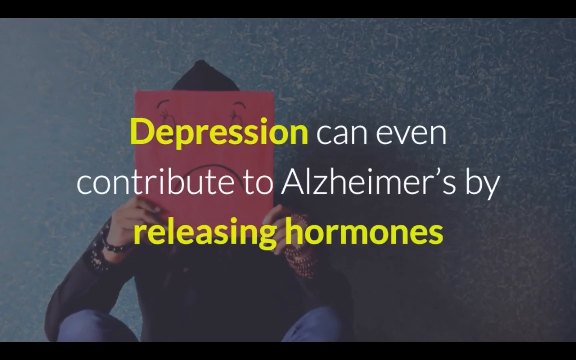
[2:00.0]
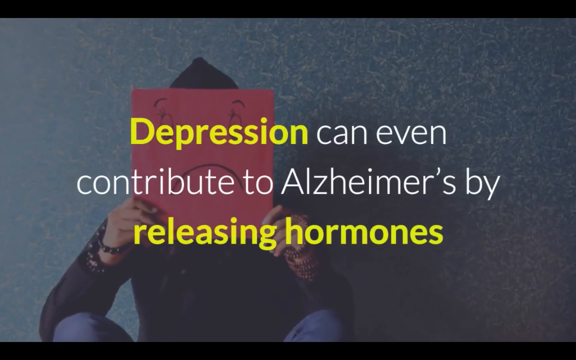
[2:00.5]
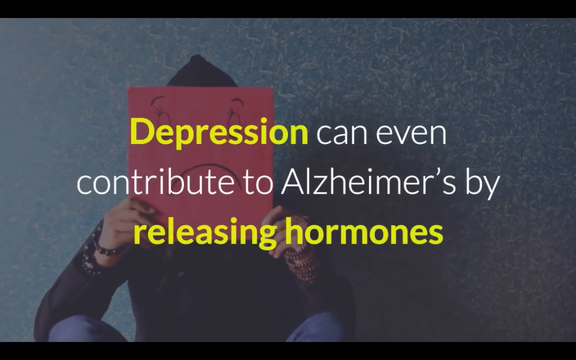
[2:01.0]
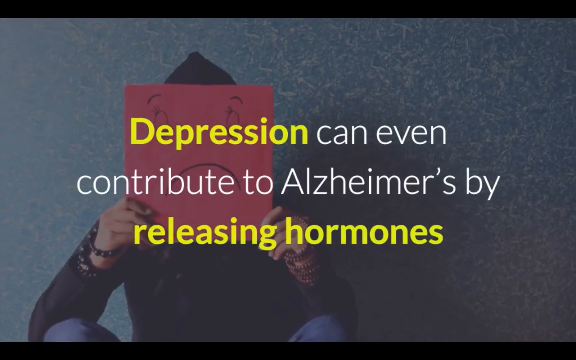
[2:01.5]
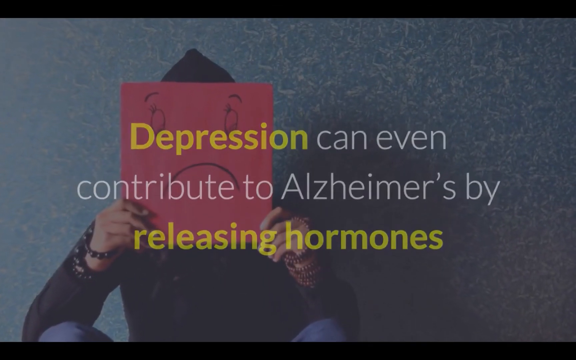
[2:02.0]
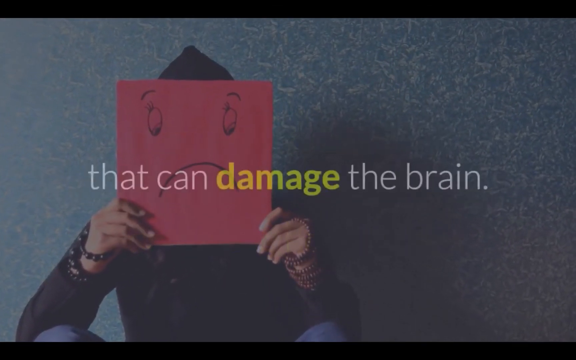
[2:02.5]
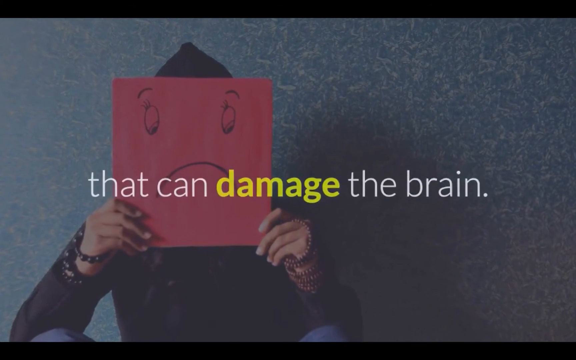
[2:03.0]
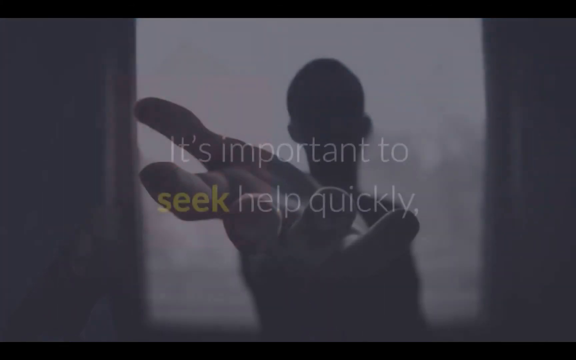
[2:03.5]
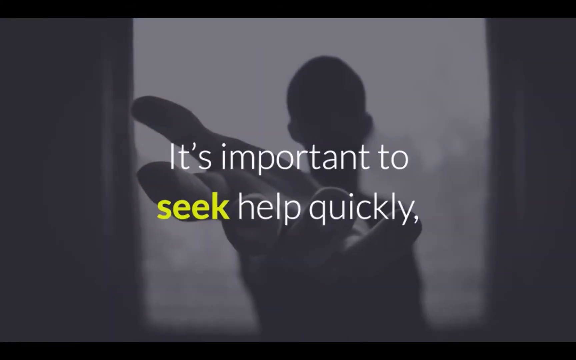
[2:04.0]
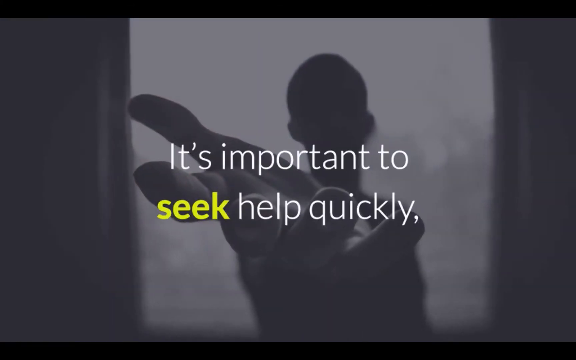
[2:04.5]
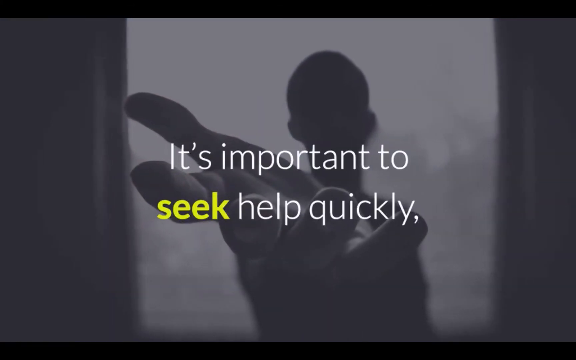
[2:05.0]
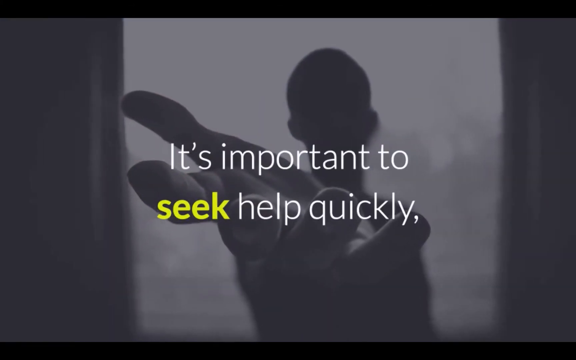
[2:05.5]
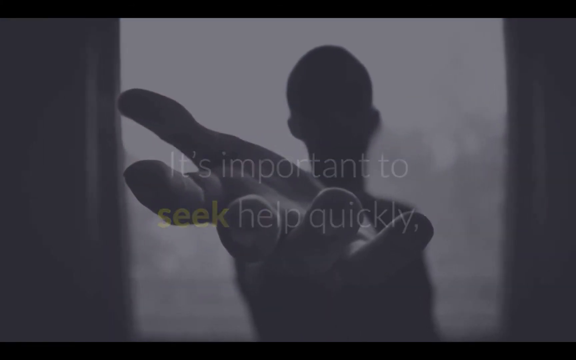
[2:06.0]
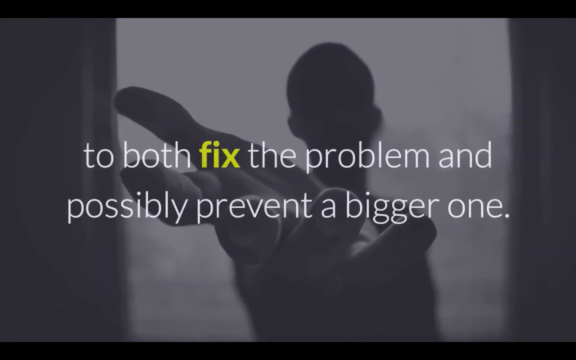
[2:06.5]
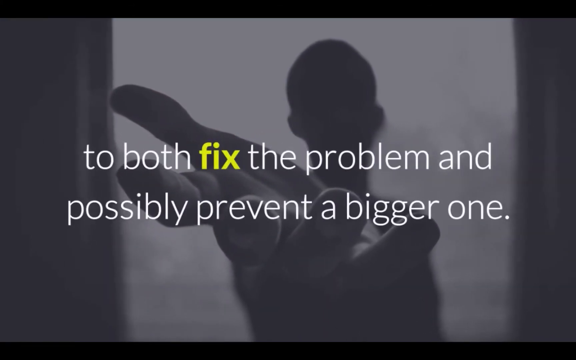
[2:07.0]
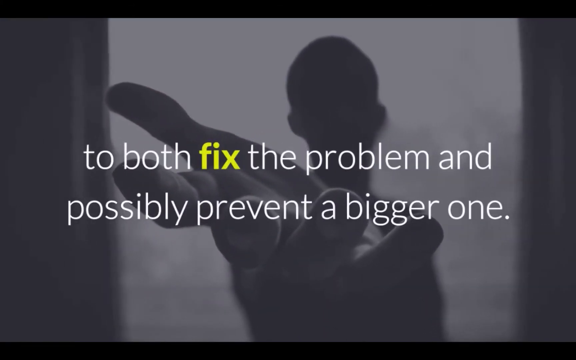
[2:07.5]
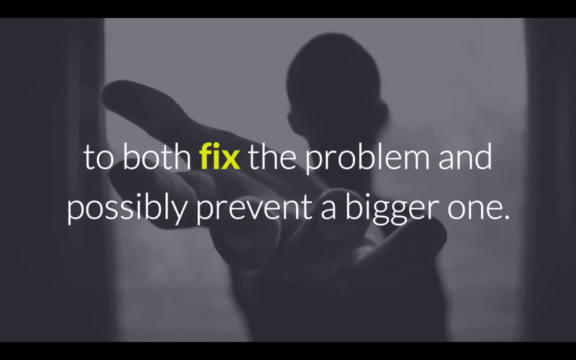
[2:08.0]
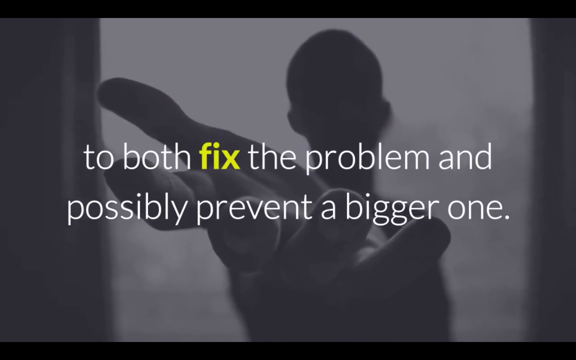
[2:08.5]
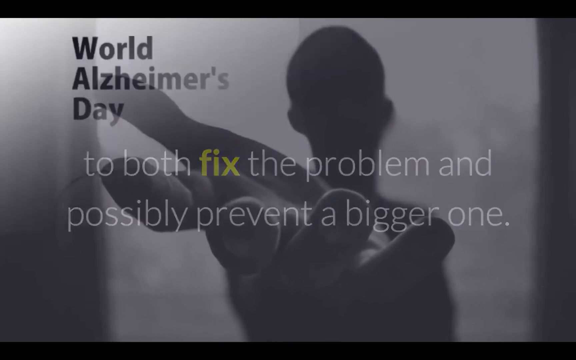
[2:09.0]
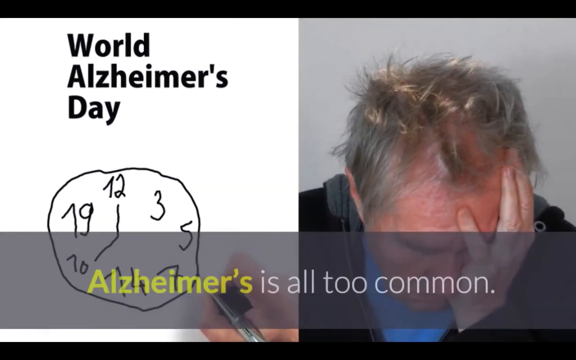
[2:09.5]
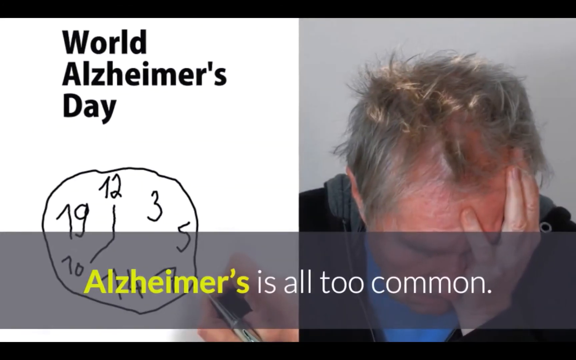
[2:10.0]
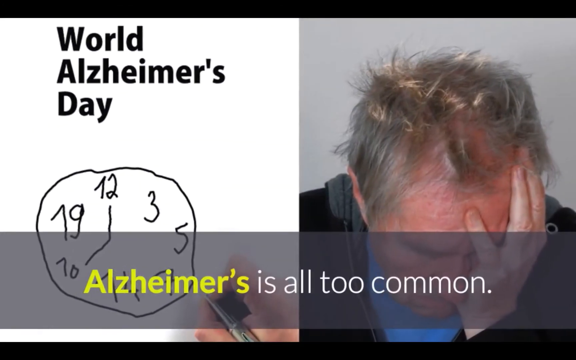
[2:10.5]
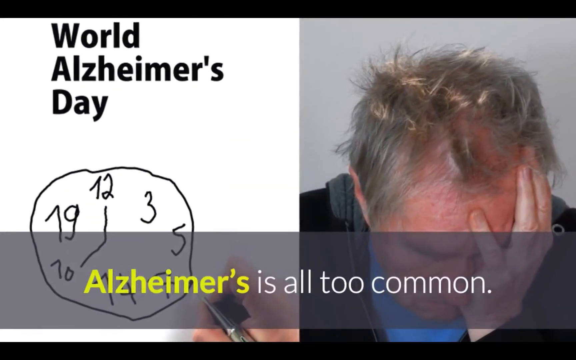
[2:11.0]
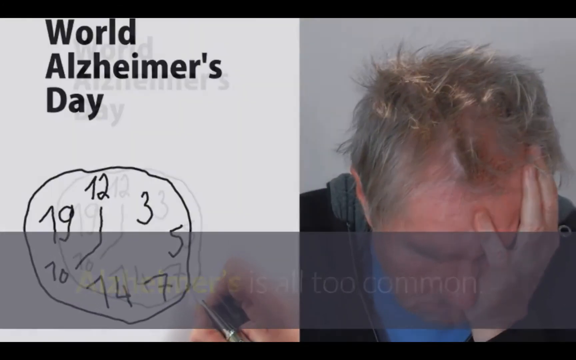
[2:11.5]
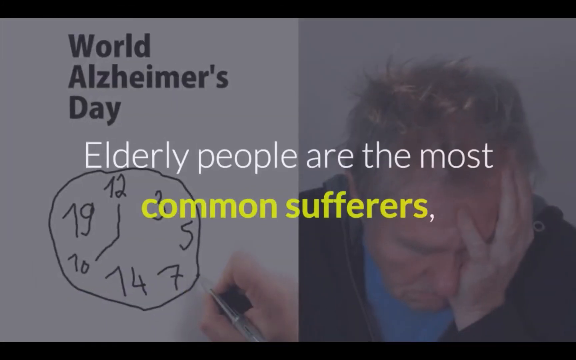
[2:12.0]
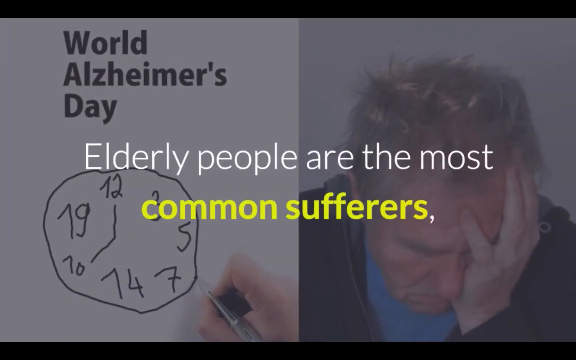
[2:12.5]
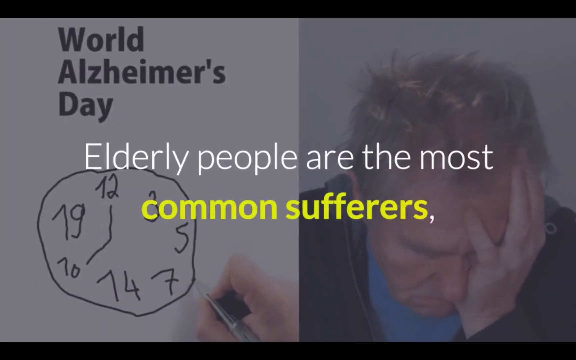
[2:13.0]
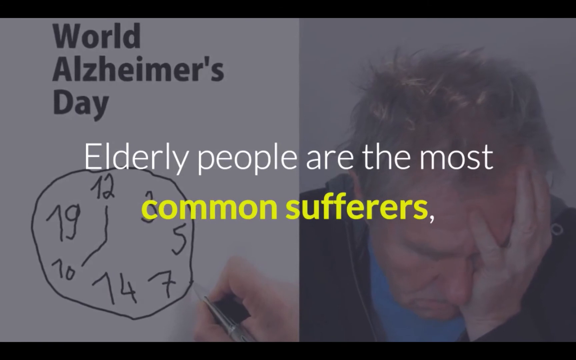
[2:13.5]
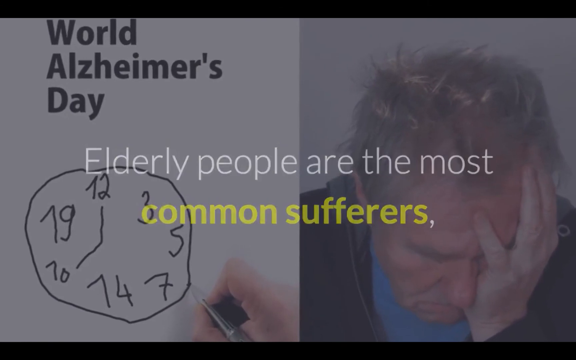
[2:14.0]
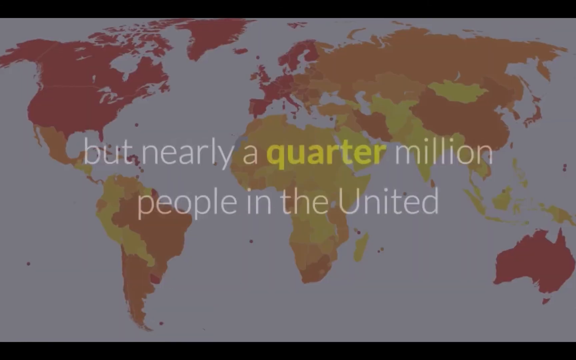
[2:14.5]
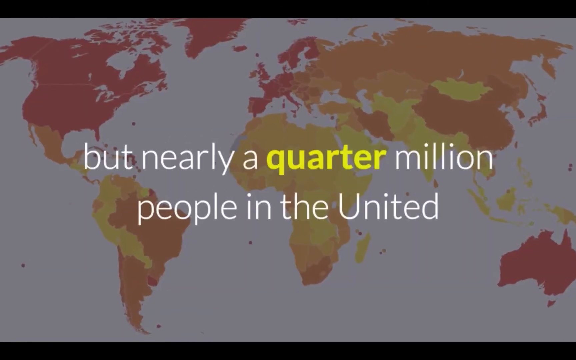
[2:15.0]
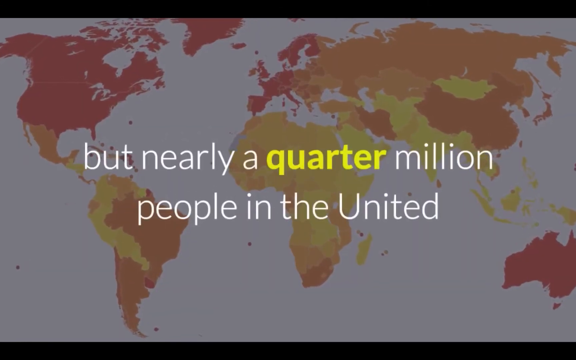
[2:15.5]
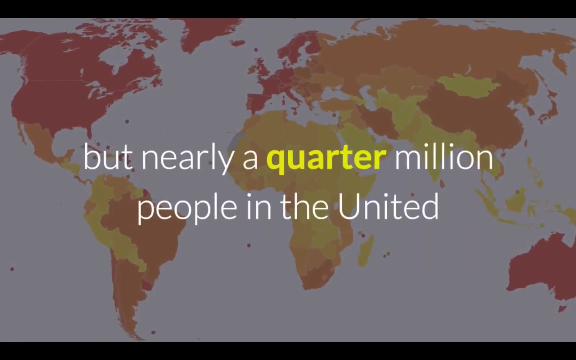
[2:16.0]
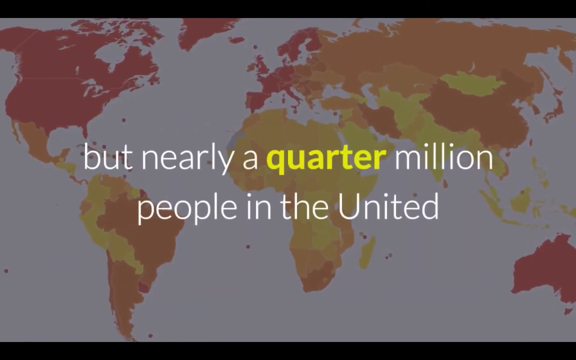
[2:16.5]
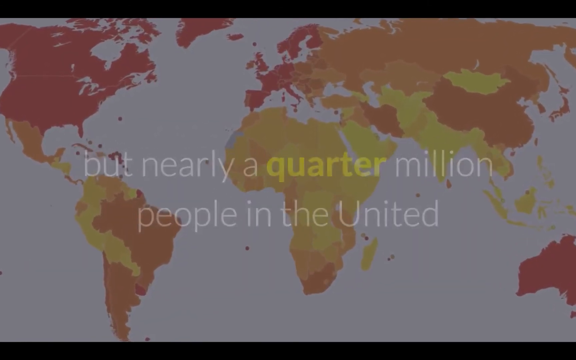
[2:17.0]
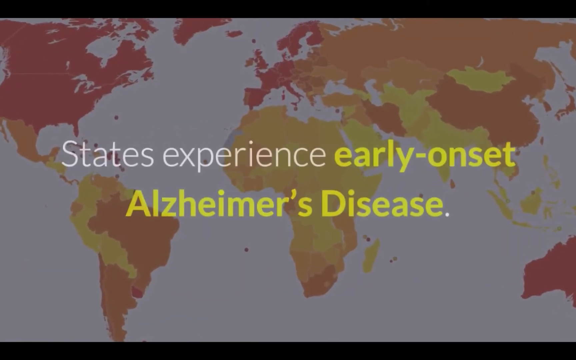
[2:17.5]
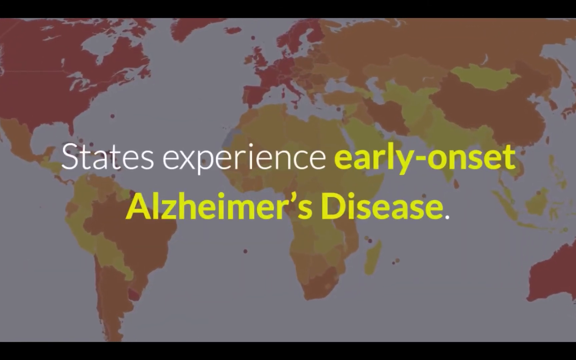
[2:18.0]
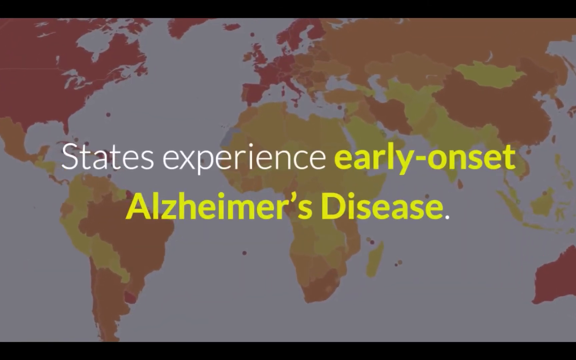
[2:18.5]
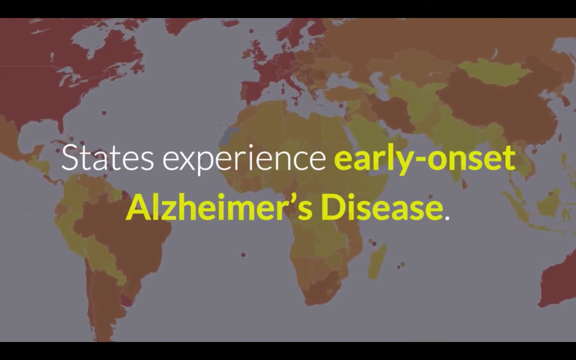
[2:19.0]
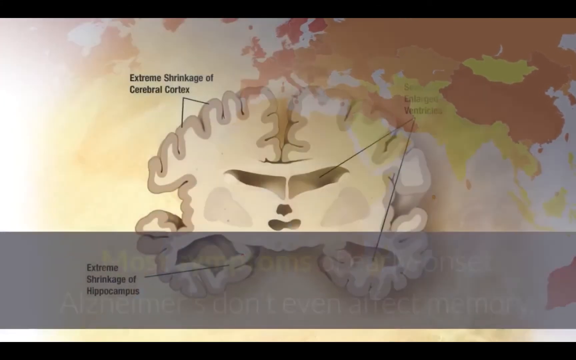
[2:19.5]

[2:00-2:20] A person wearing black holds a red paper with a sad face on it, with a message reading "depression can even contribute to Alzheimer's." A person shows his open hands, with a message reading "it's important to seek help quickly." An old man puts his hand on his face and looks sad; on the other side is a column with black words reading "World Alzheimer's" and a clock. Text reads "older people are the most people that are found with Alzheimer, but near a quarter million people in the United," and a map appears. The scene then slides to a drawn brain.